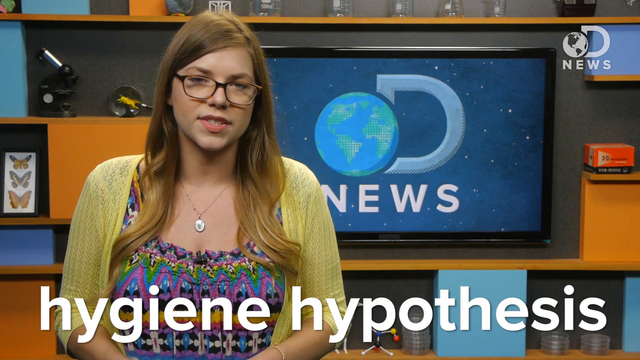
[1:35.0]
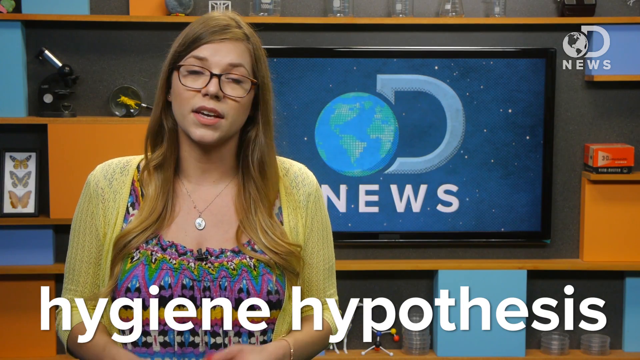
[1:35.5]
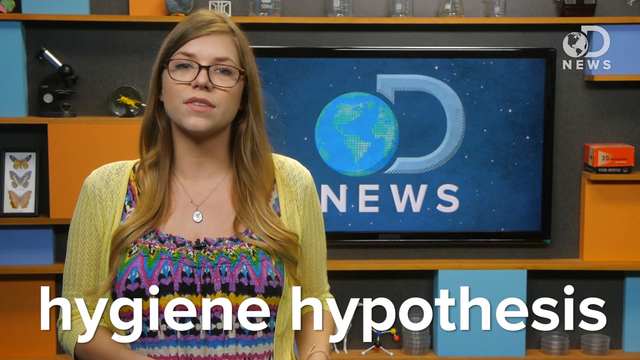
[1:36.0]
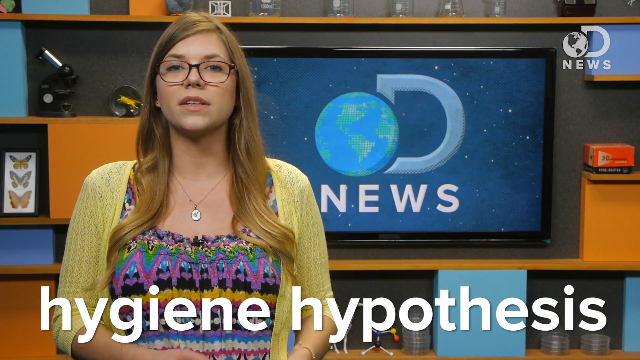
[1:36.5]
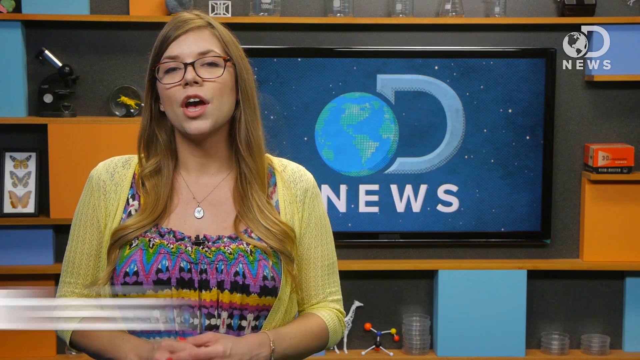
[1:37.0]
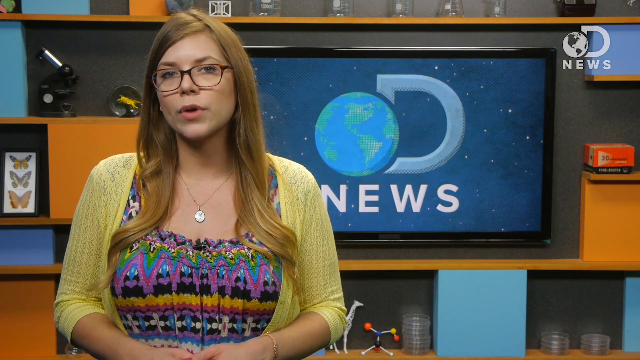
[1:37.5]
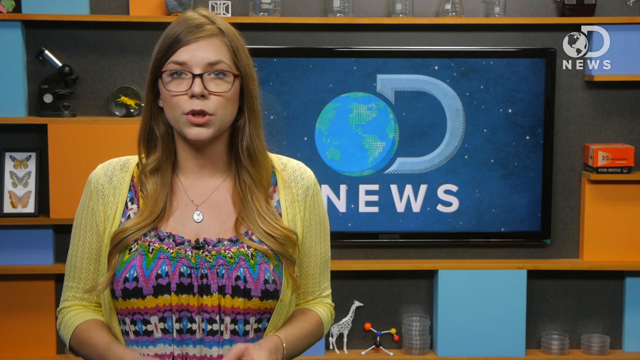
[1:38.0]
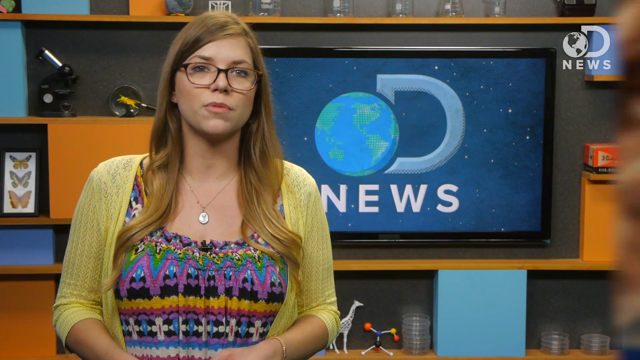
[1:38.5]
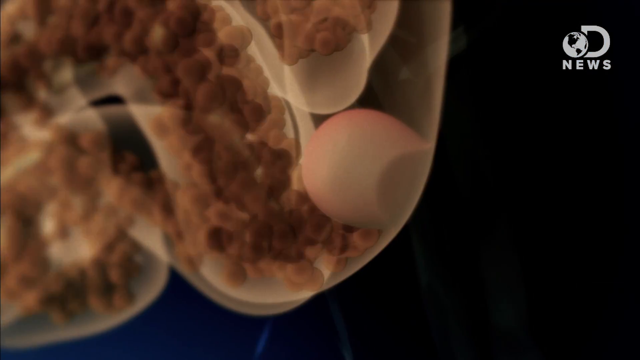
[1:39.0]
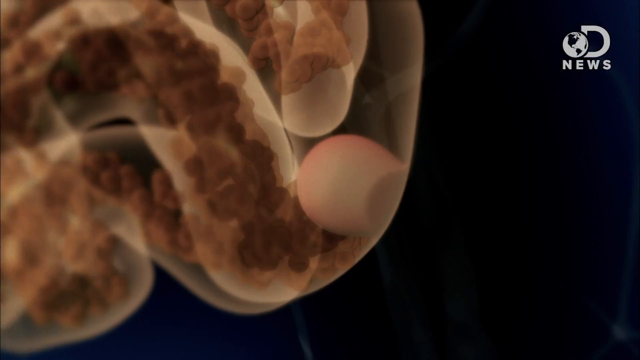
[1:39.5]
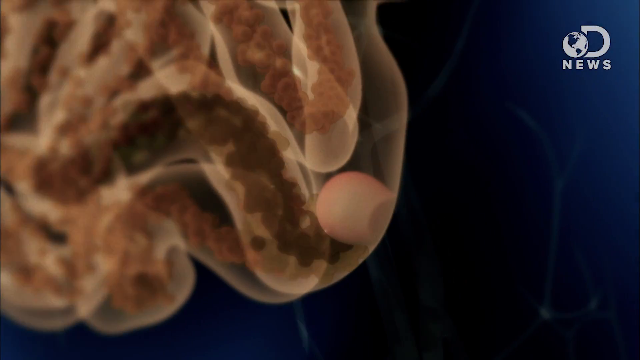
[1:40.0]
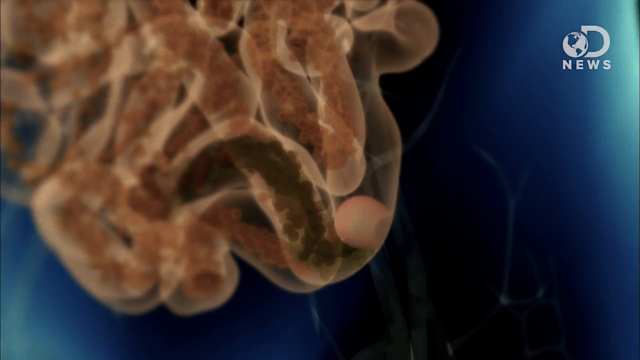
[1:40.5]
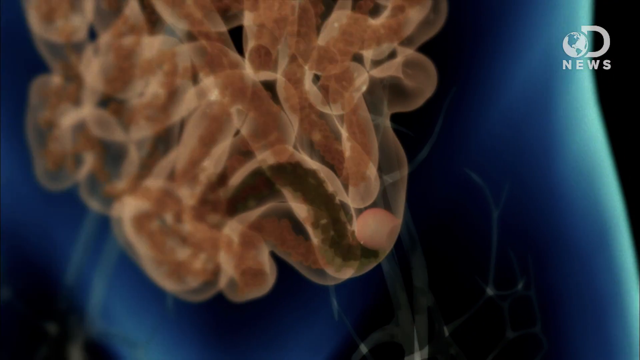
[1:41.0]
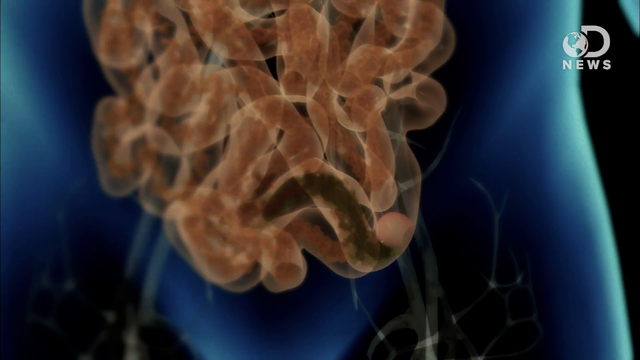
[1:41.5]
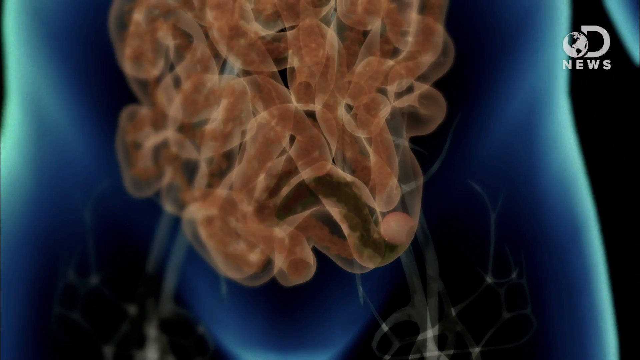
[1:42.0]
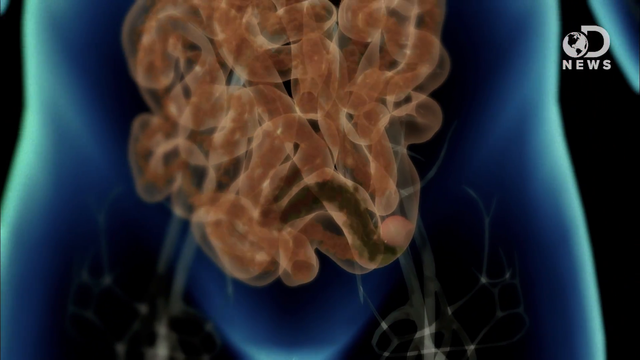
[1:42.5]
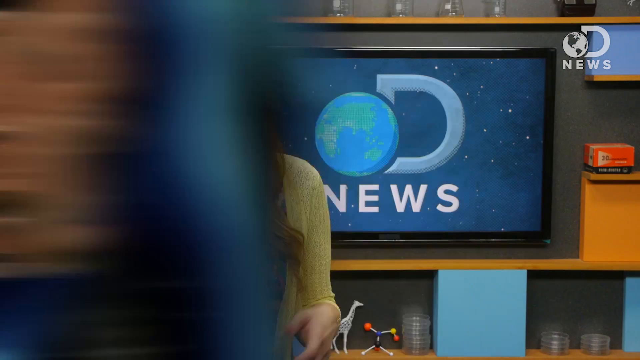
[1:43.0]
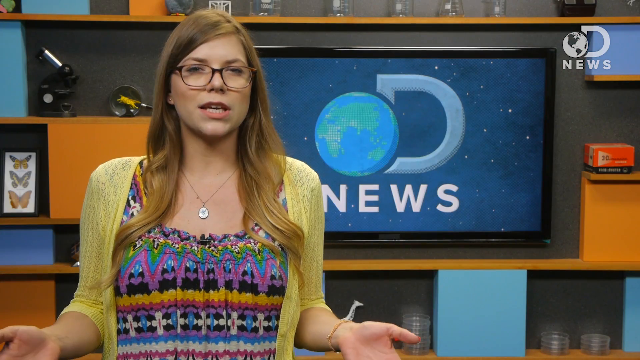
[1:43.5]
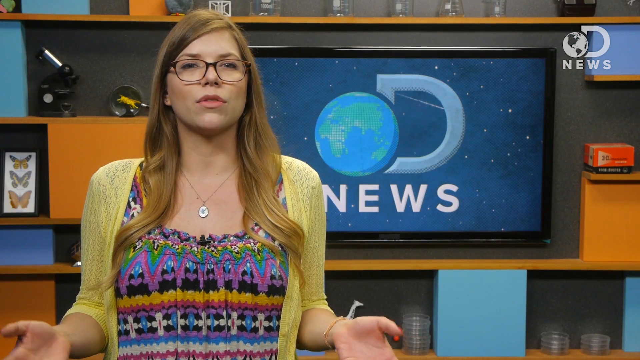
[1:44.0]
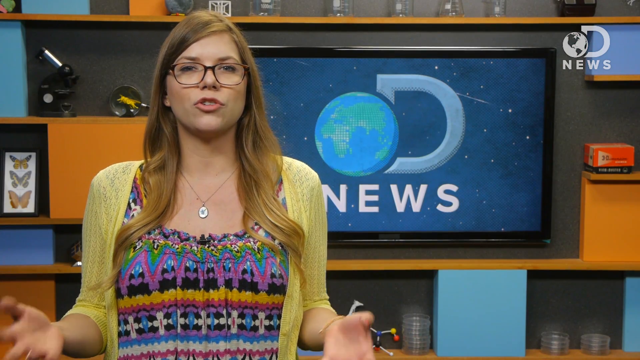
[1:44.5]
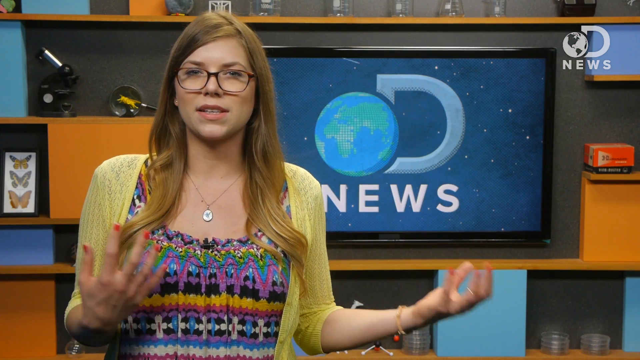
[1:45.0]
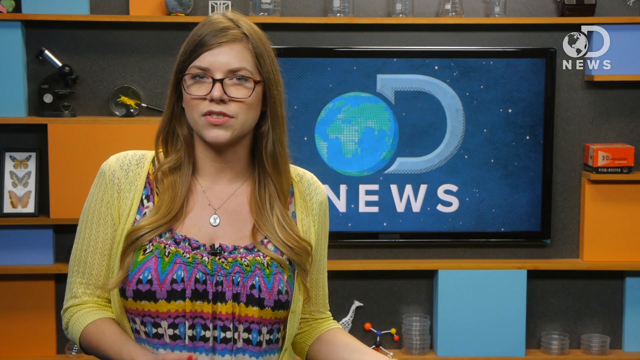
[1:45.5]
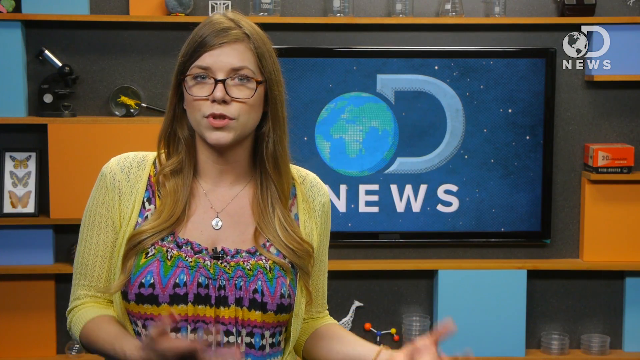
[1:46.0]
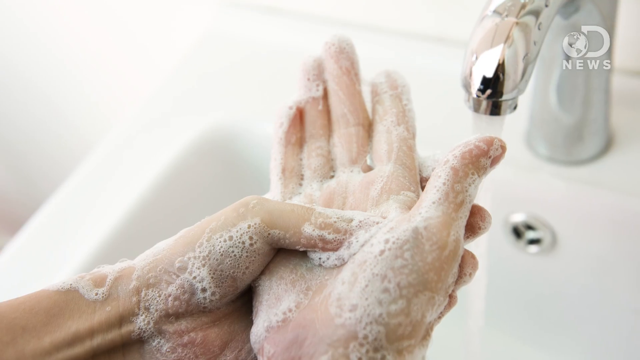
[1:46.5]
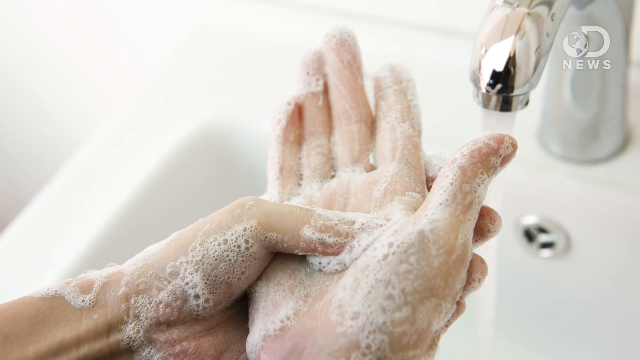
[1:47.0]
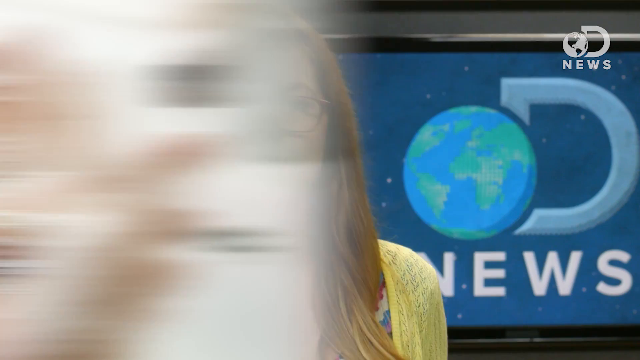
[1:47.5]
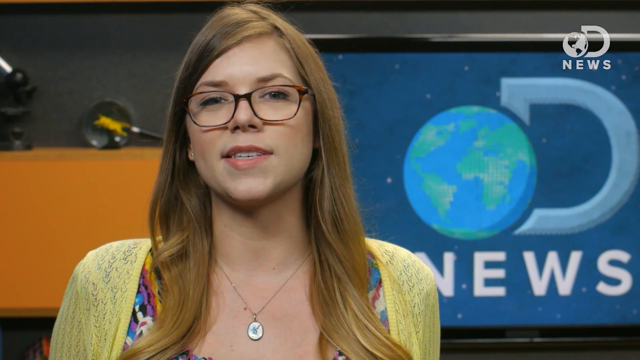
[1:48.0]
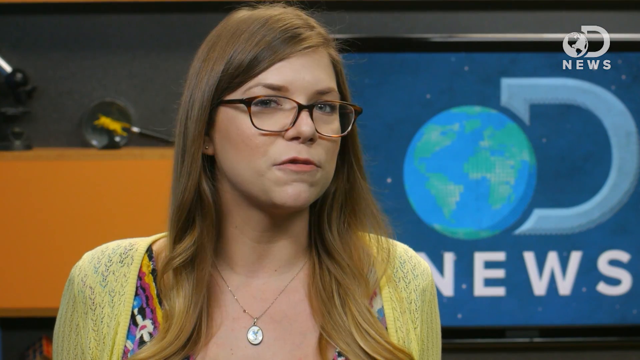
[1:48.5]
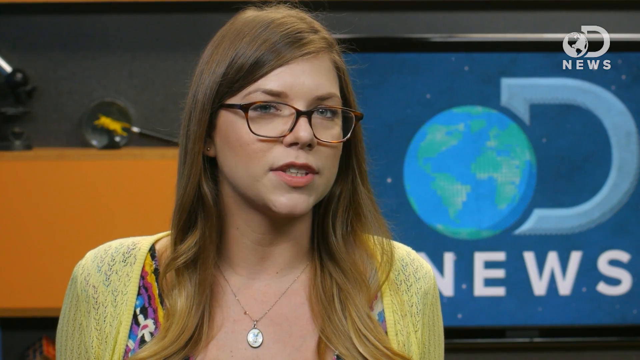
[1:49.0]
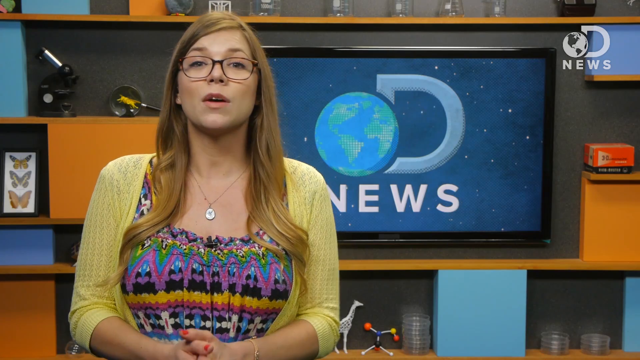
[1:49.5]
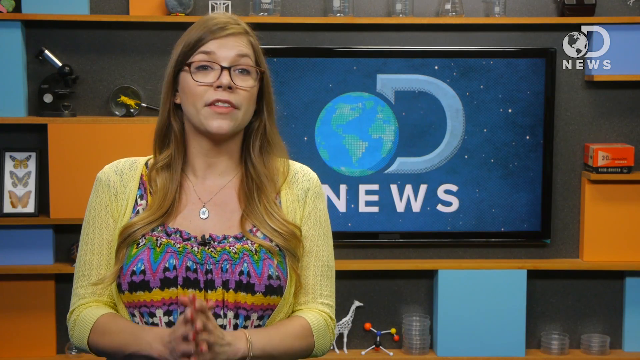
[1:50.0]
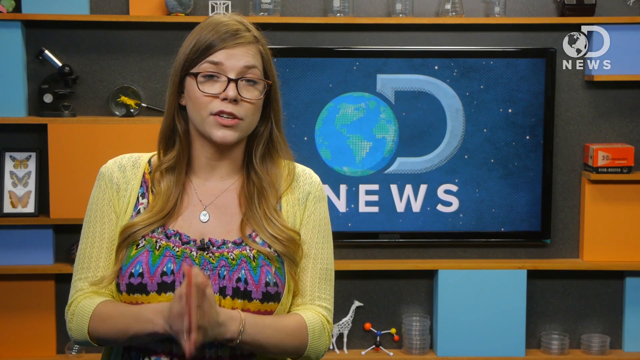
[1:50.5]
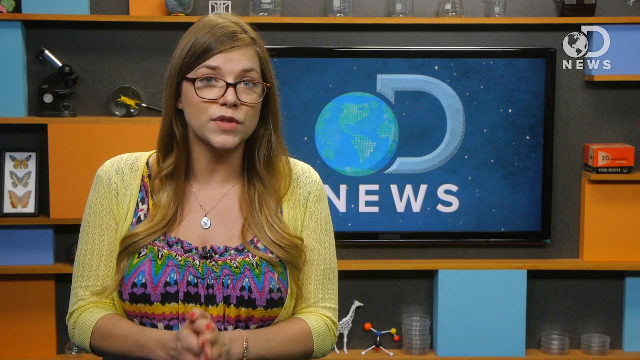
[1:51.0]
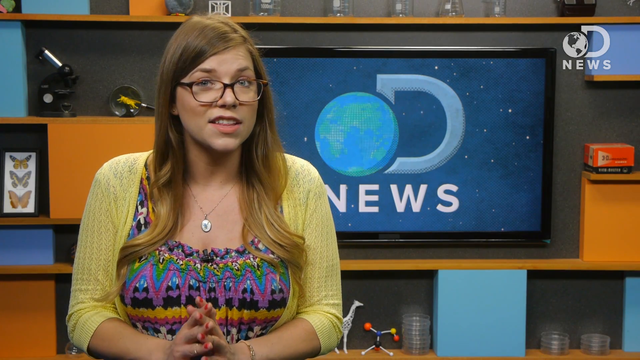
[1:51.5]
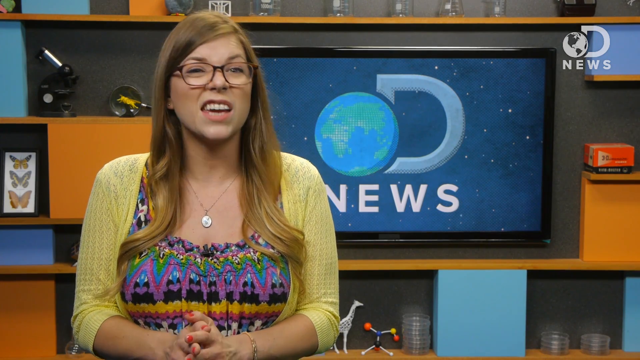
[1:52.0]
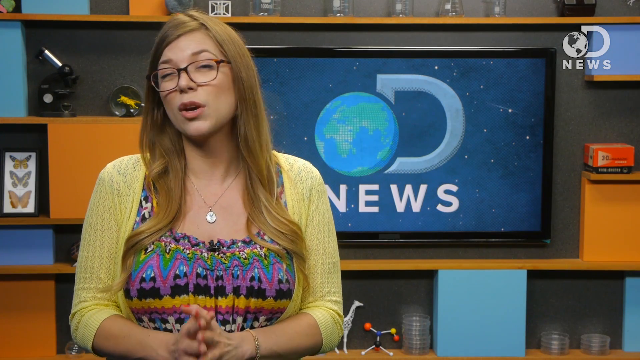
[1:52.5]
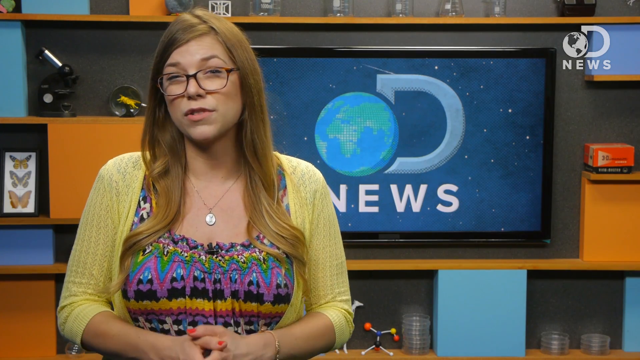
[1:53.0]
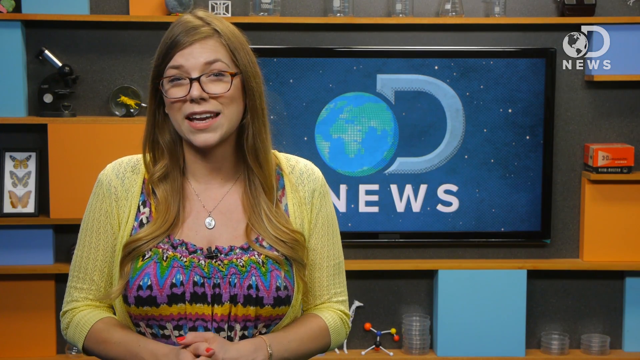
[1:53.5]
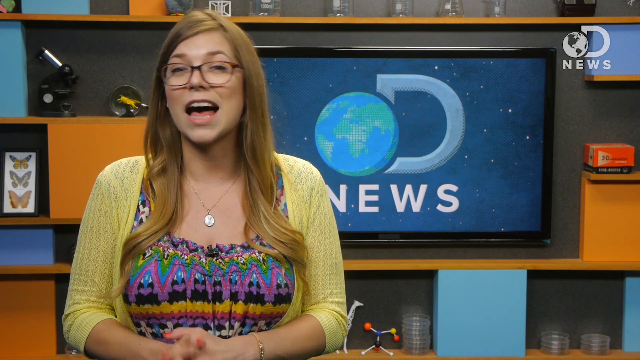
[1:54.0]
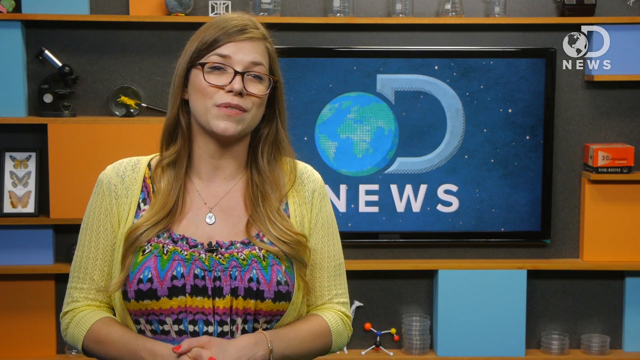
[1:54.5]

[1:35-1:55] A view of the inside of someone's body shows food, water and food particles moving through the intestines. The background is dark and it looks almost like an ultrasound view into the body. There is kind of a nodule in one area; the intestines are pinkish and bunched together, with food particles moving kind of quickly through them. It could be the small or large intestine; it seems to be in the middle of the body and doesn't look as large as the large intestine. As the woman continues talking, the video periodically cuts to a Caucasian pair of hands, small and thinner, possibly a woman's, covered in suds as they are washed over a white sink.